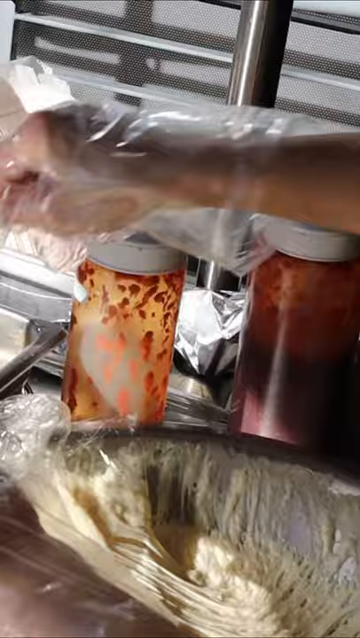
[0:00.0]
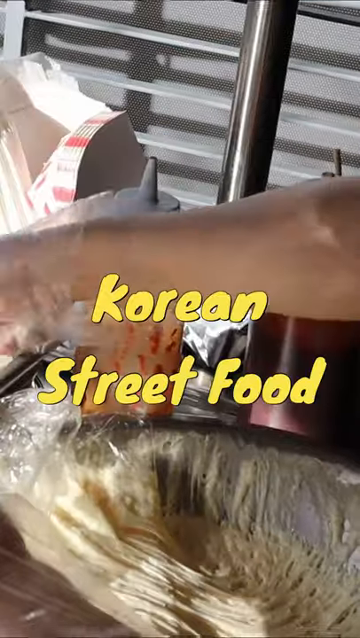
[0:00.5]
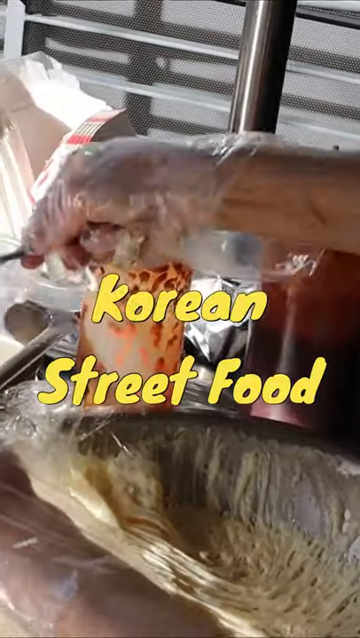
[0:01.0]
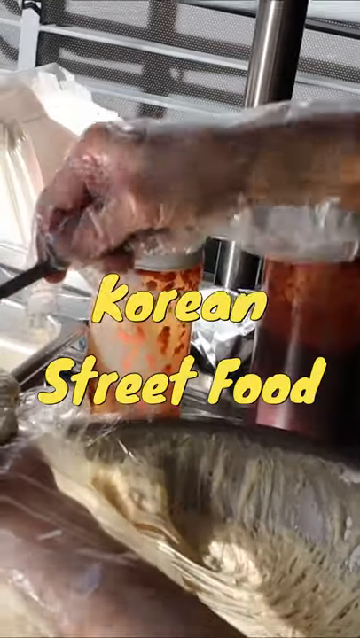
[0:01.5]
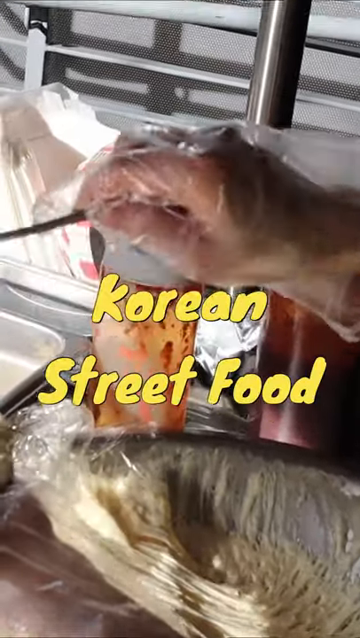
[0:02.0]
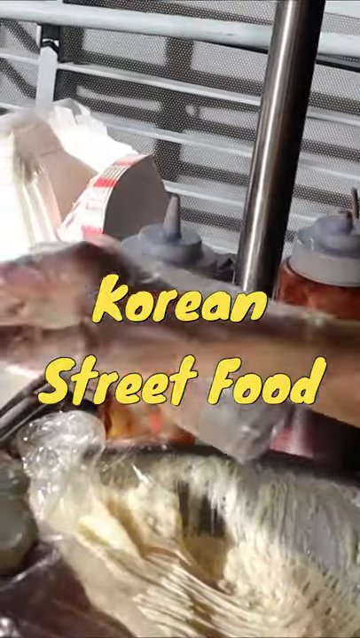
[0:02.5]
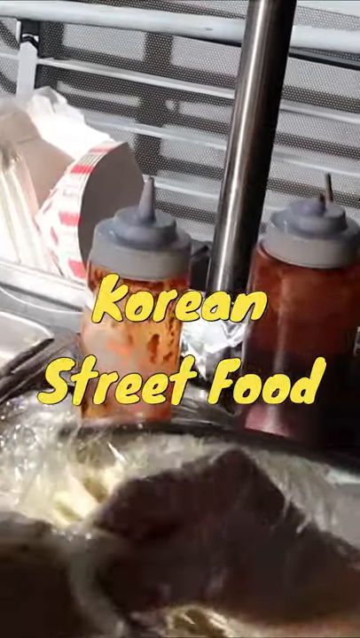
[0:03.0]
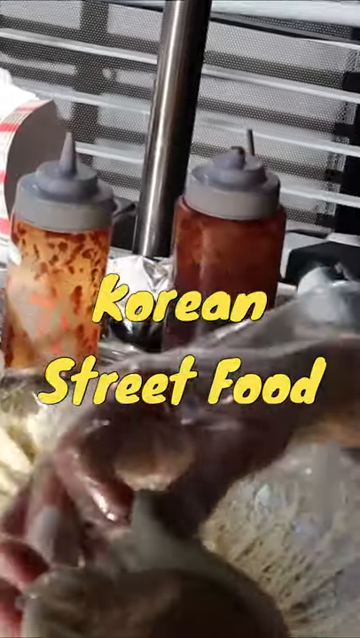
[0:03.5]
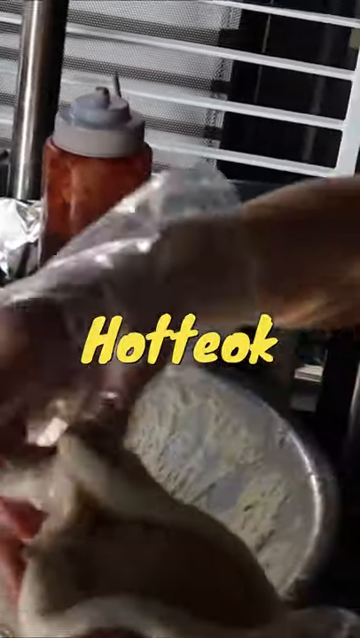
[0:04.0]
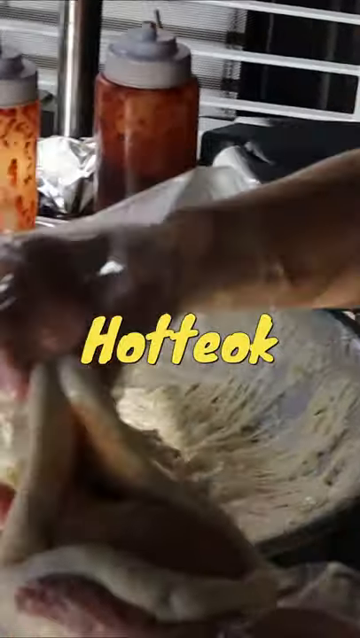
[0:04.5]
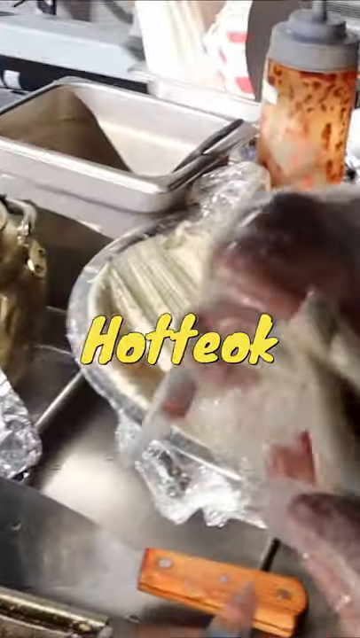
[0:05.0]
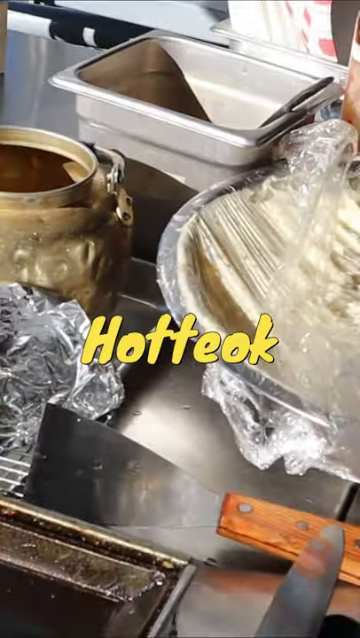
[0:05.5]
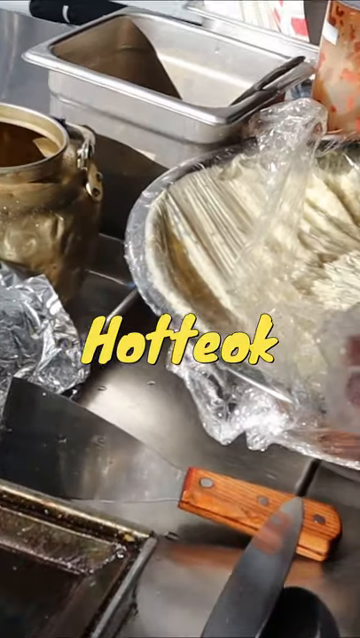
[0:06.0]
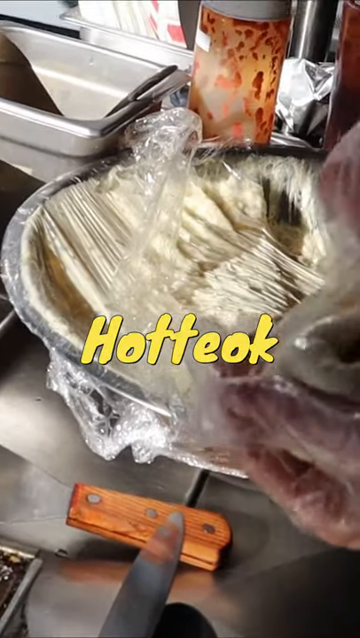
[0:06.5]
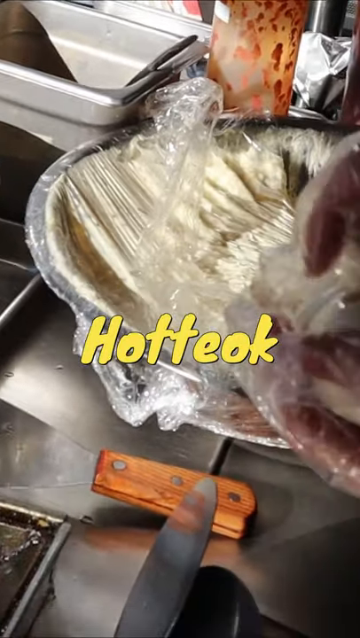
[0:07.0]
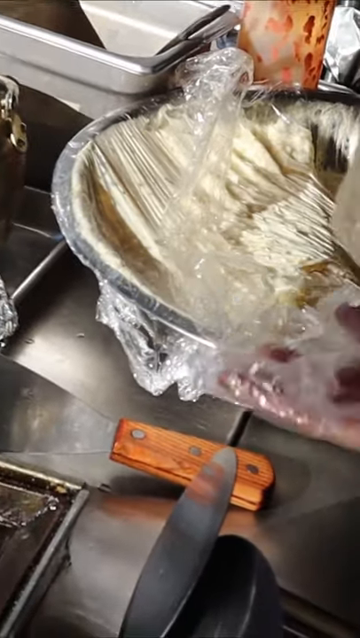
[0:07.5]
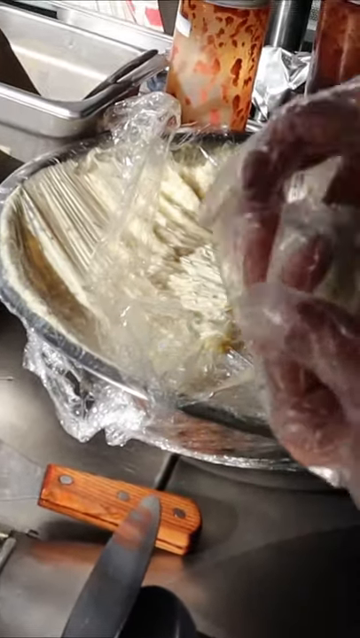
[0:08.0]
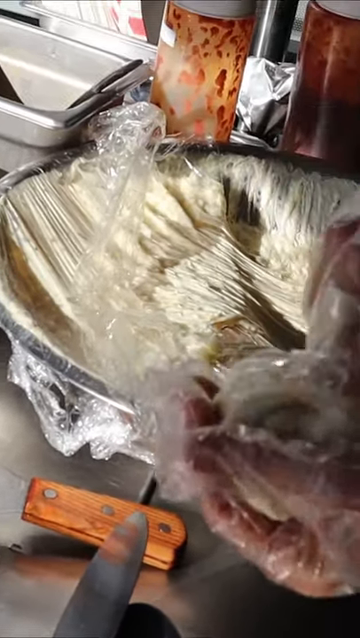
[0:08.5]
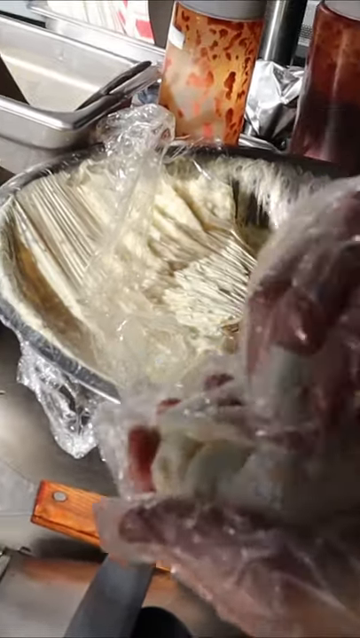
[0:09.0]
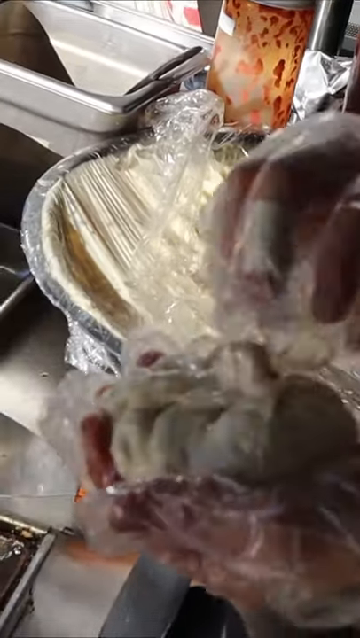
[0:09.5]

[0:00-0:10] A person wearing plastic gloves appears to be making a street food. There are containers with something inside, seemingly a sauce used in the preparation. Yellow Korean text on the screen reads, in translation, hot dog, so a hot dog is being made. The person holds dough in their hands, puts a vienna inside the dough and rolls it together. It seems the person is about to dip the dough into boiling oil to fry it.